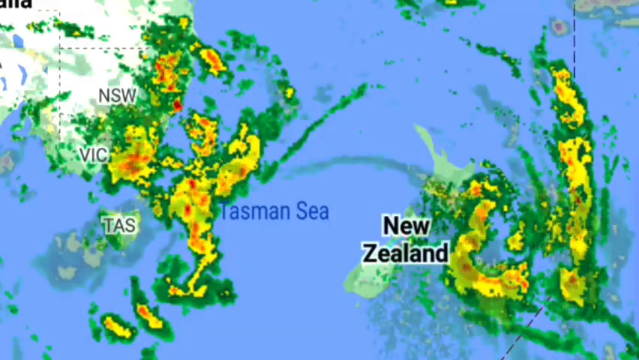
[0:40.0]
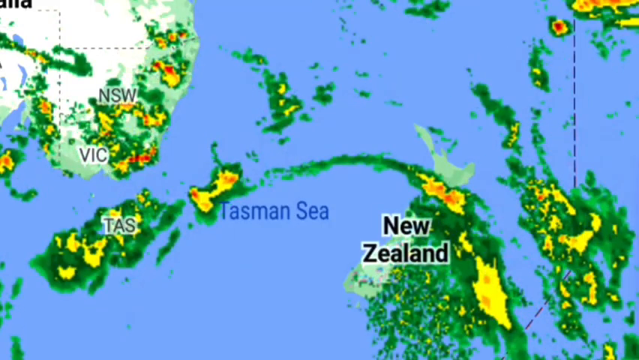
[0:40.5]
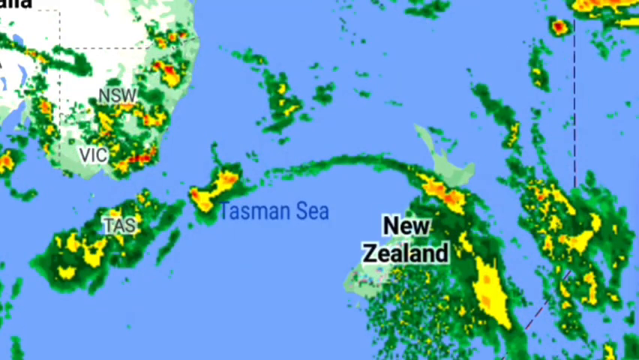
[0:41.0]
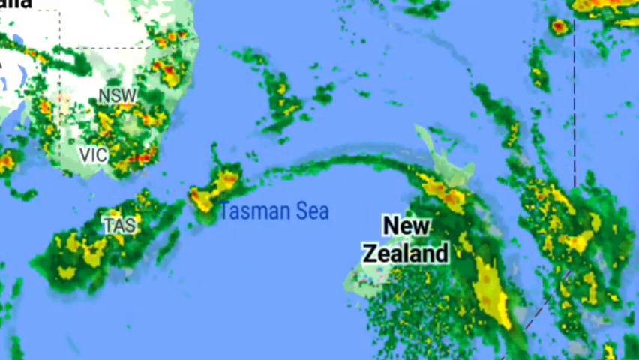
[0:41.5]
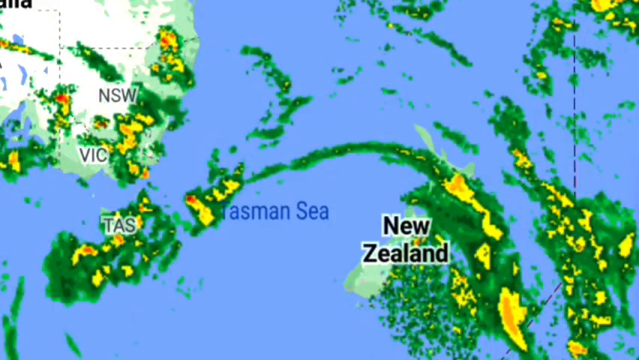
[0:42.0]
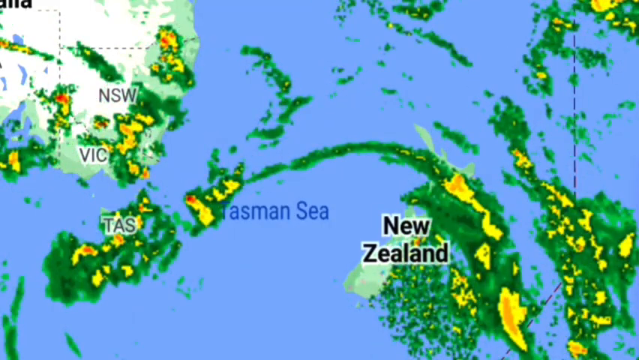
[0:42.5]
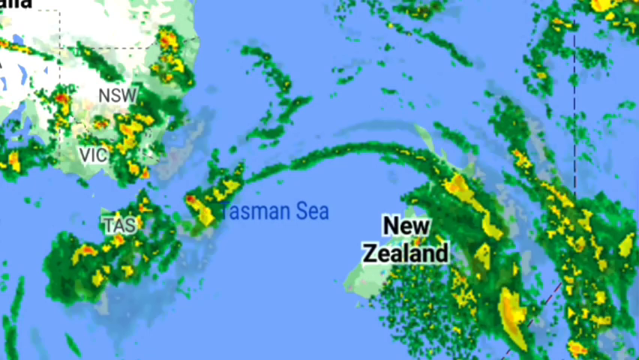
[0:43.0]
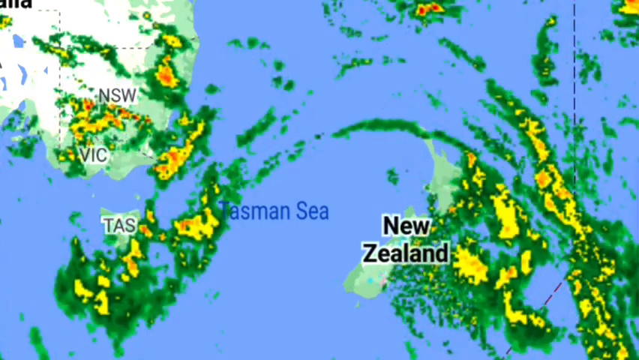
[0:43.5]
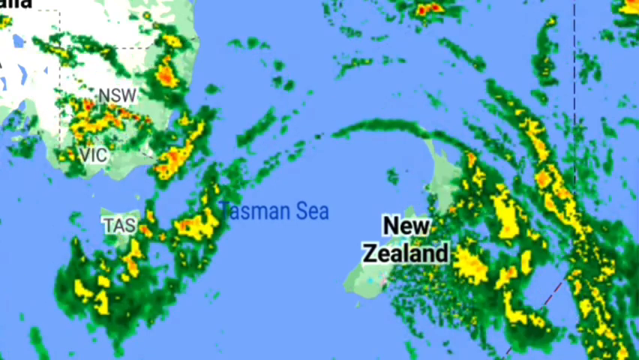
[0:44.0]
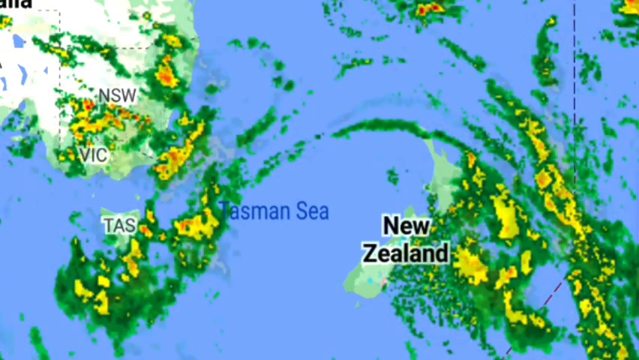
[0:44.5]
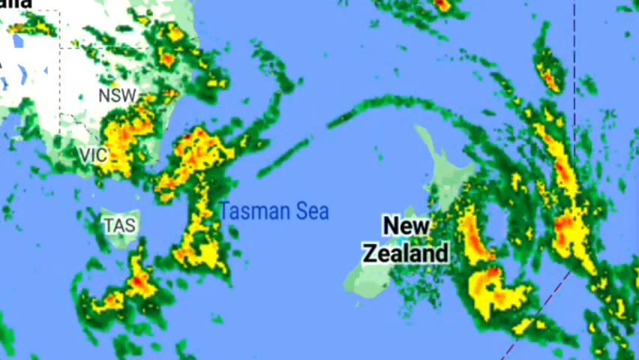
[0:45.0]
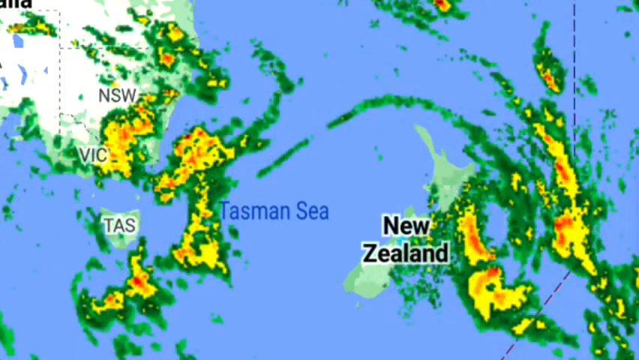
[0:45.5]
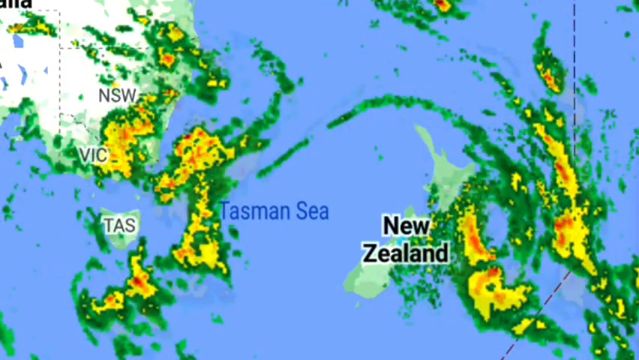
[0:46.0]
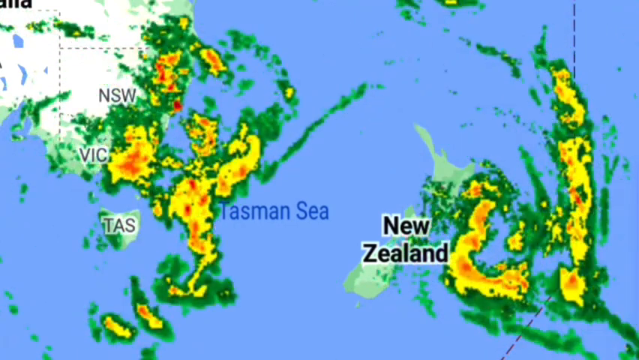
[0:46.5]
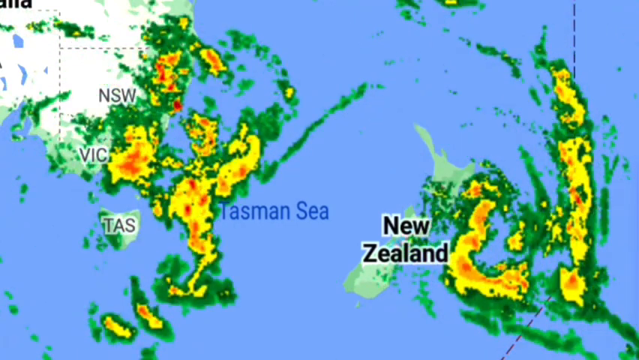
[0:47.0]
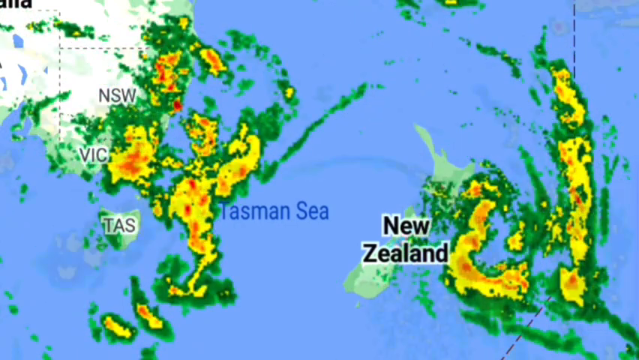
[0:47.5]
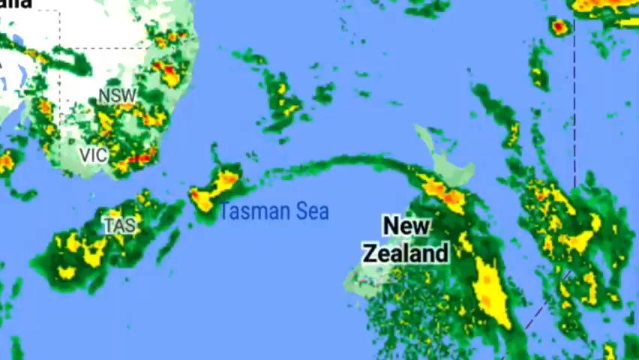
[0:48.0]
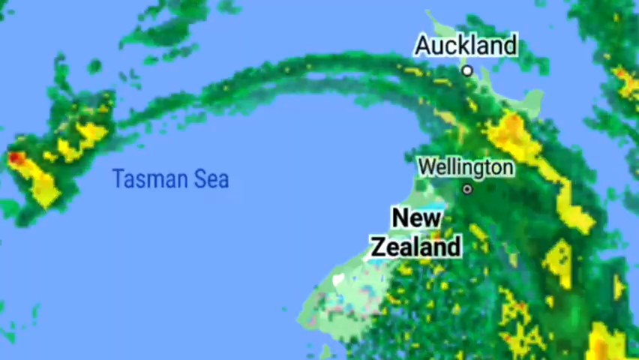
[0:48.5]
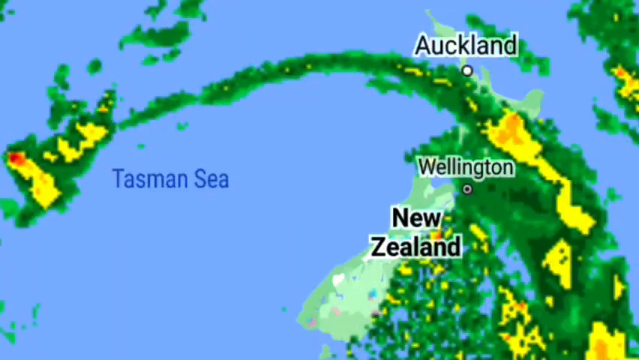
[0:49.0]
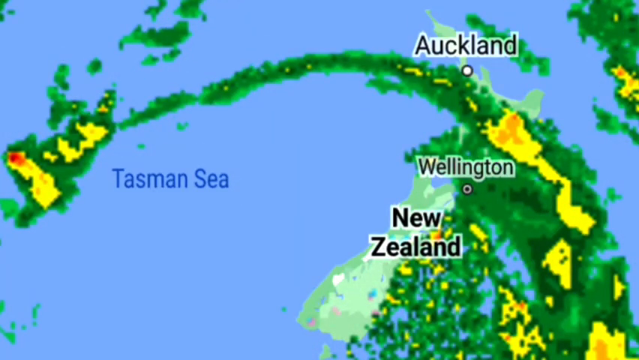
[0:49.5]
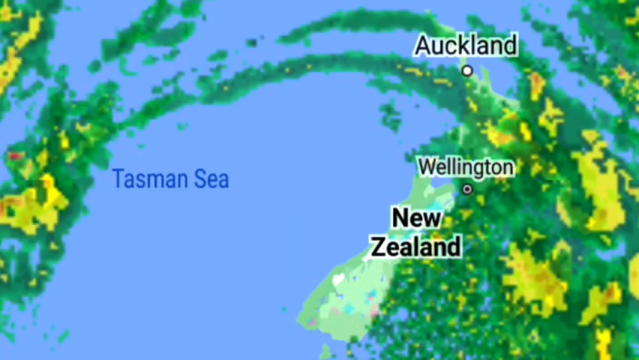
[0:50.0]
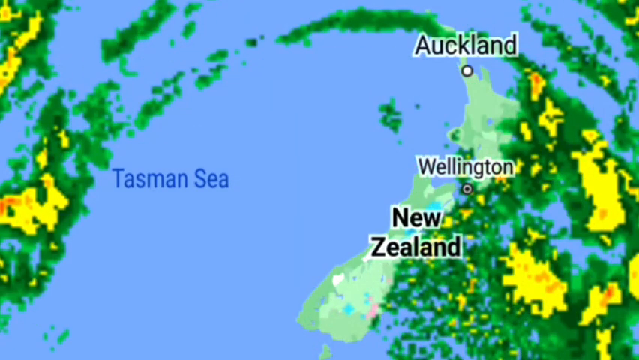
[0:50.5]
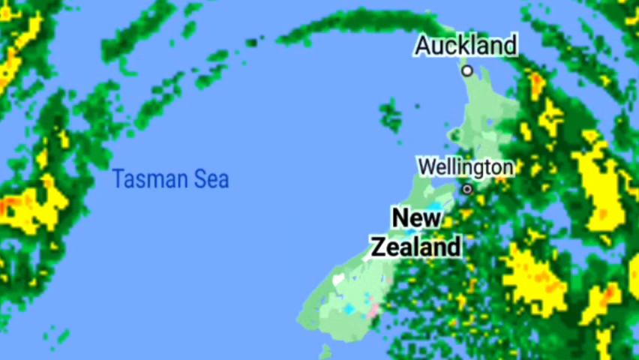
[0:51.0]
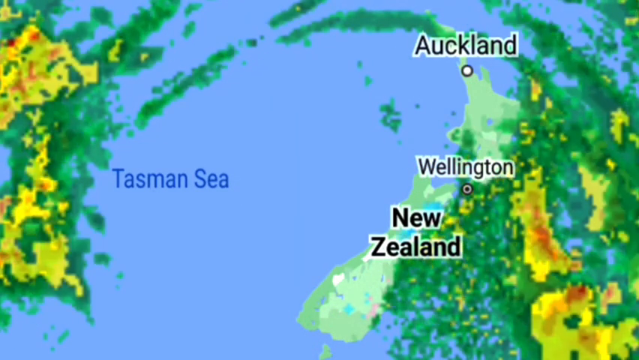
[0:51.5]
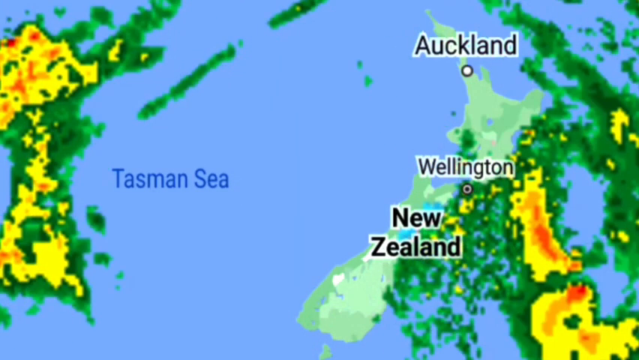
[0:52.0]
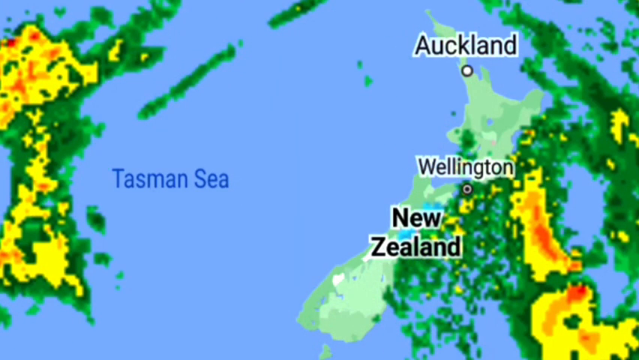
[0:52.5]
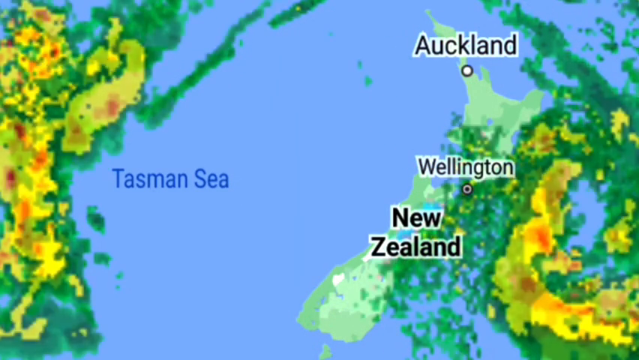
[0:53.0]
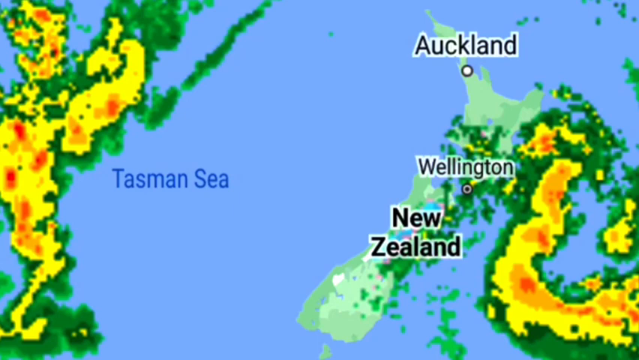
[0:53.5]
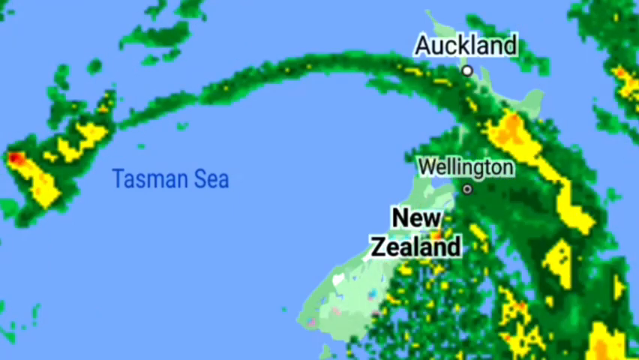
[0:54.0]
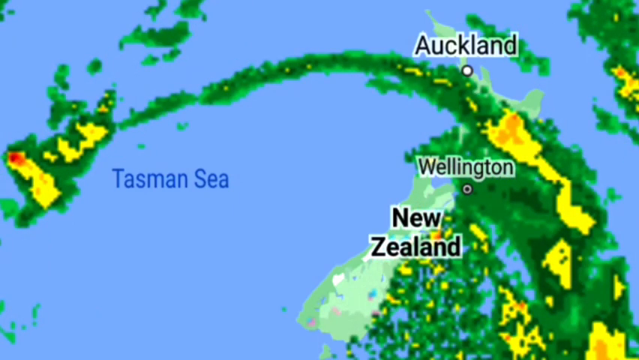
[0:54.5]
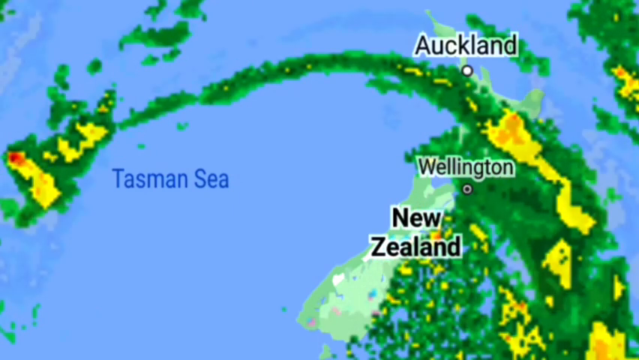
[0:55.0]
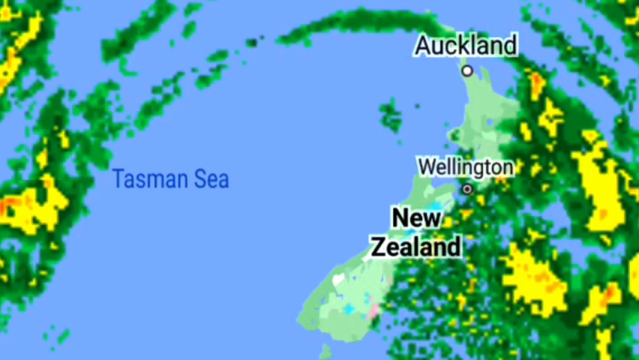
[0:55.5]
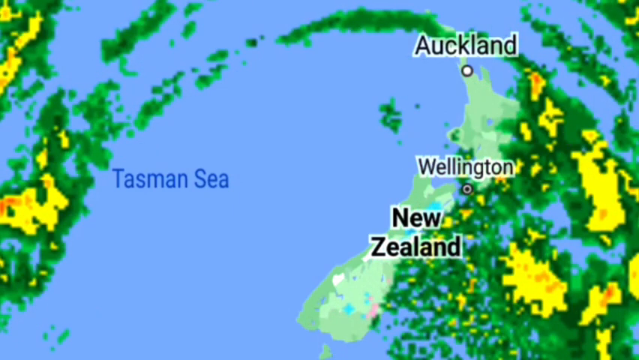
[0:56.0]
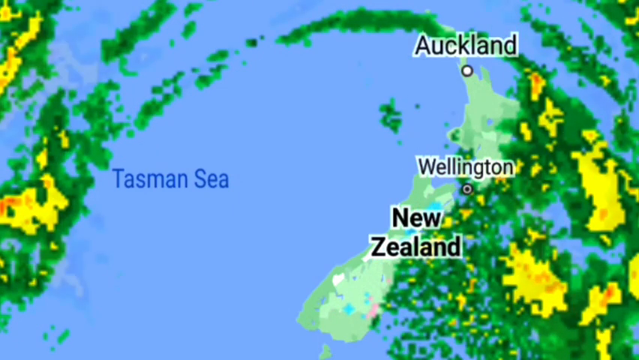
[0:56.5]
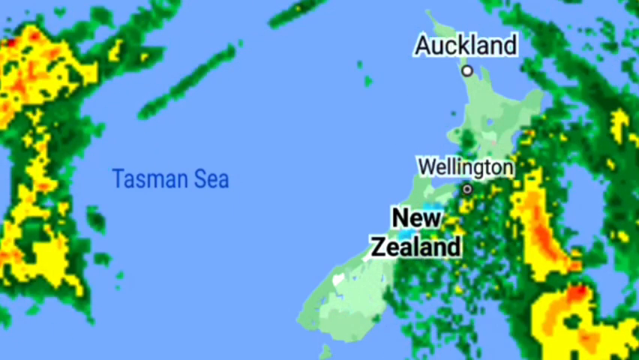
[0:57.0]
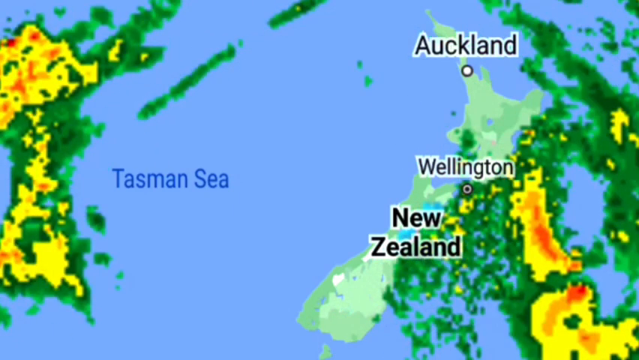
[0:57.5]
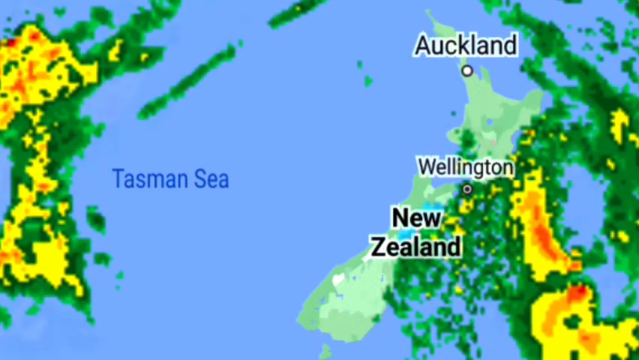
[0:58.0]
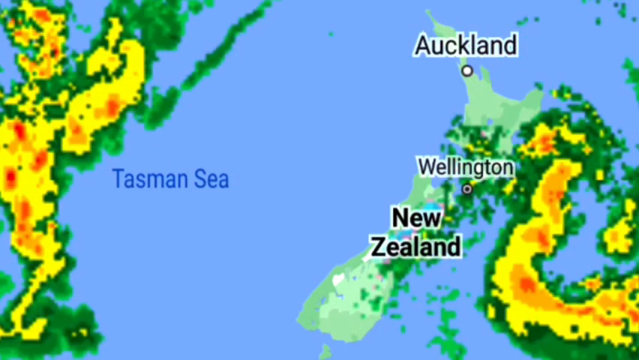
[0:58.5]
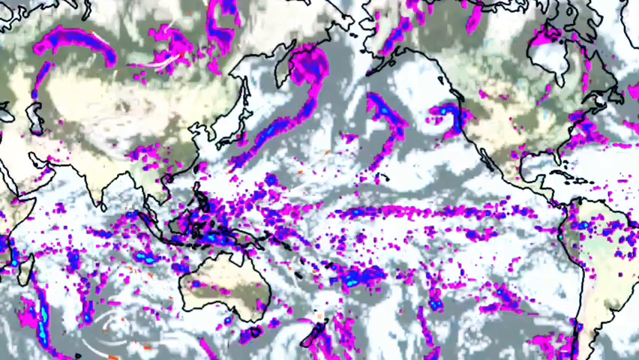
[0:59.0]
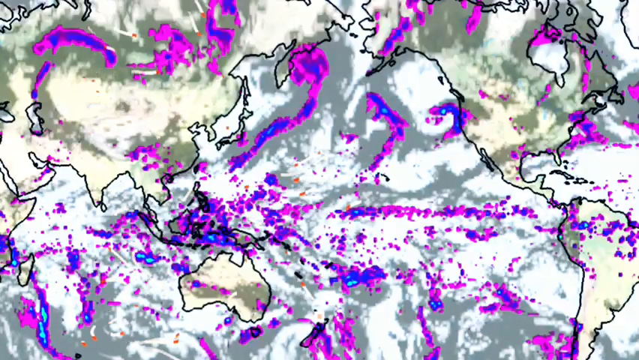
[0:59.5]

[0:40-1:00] A map shows the bottom right of Australia in the top left corner. Green, yellow, orange and red areas along the edges of Australia move from left to right off the land, showing storms. On this piece of Australia are the letters "NSW", and down at the bottom along the edge of Australia is "VIS". A blue area is labelled "Tasman Sea", and the storms are shown moving off Australia into the Tasman Sea. To the right of those storms is a small green landmass with "New Zealand" written over it, and big green, yellow, orange and red spots over New Zealand show the intensities of the storms there.